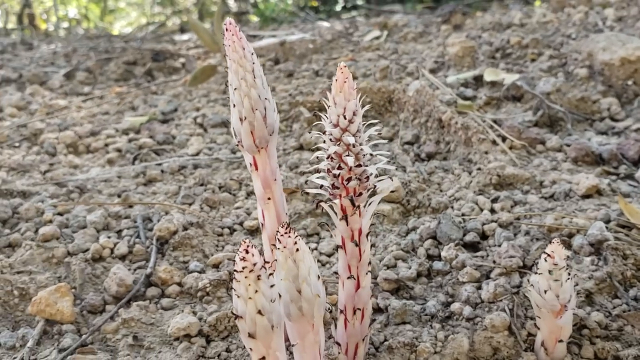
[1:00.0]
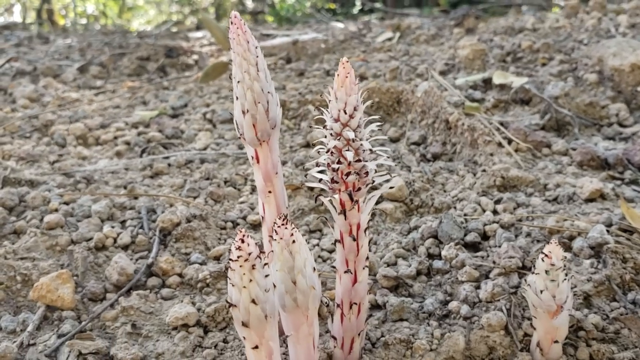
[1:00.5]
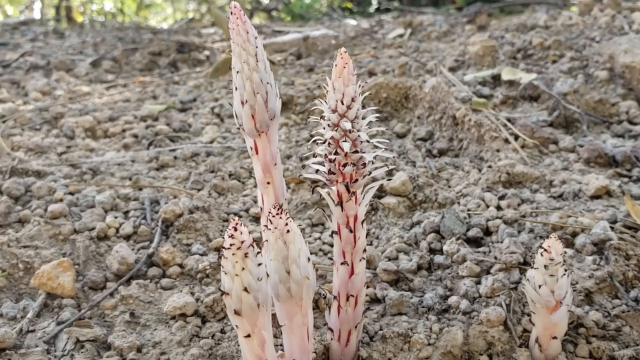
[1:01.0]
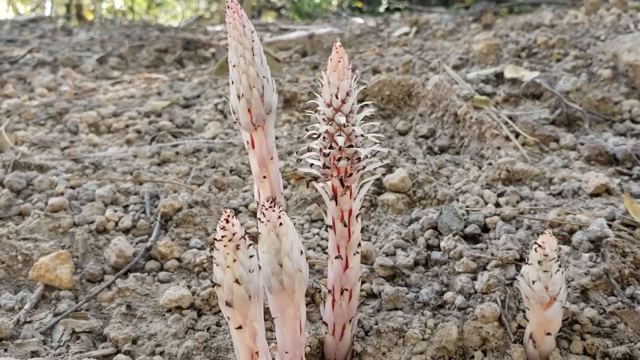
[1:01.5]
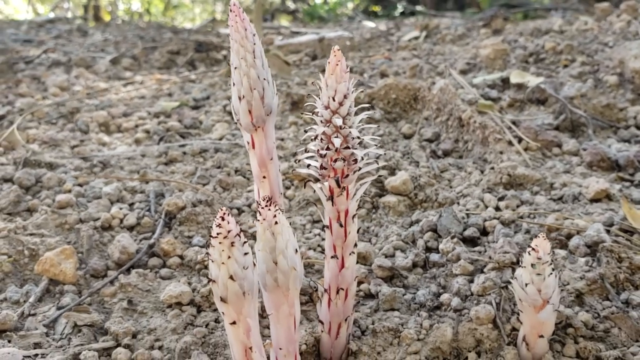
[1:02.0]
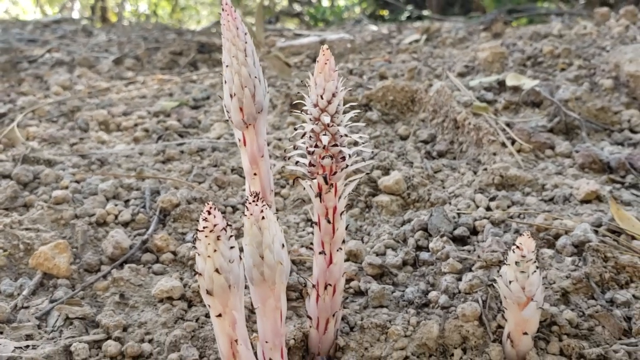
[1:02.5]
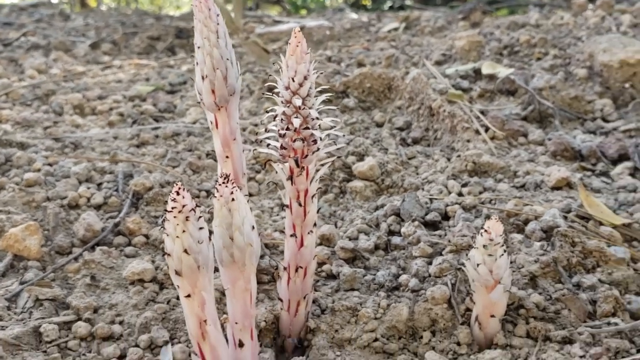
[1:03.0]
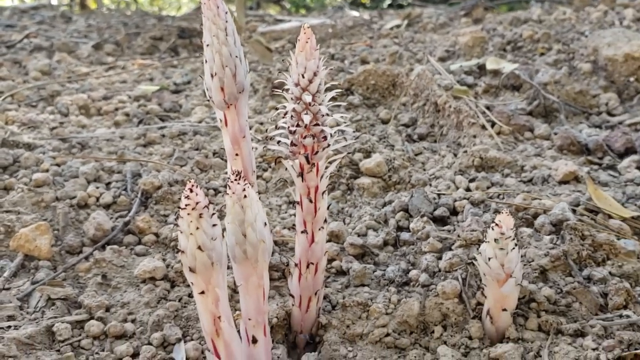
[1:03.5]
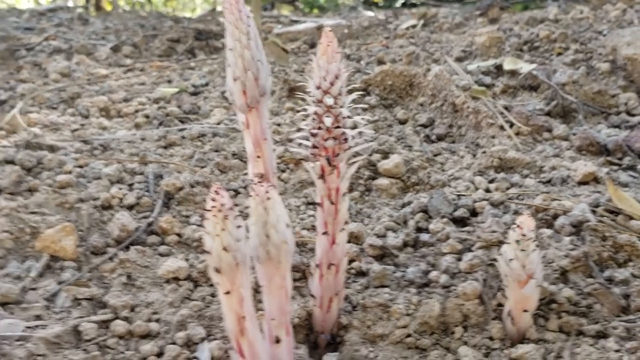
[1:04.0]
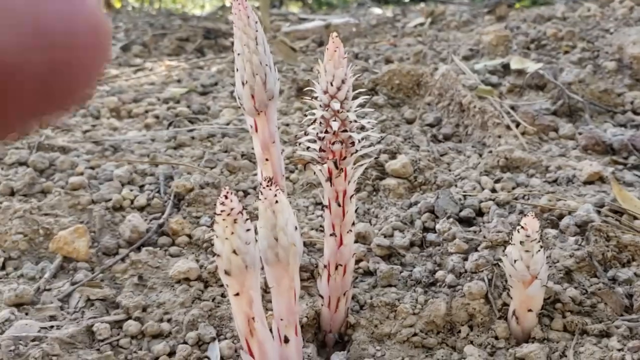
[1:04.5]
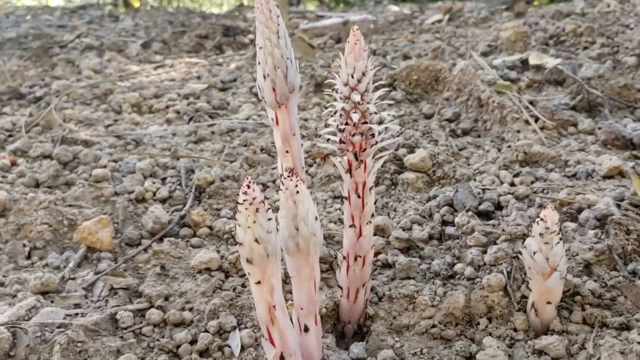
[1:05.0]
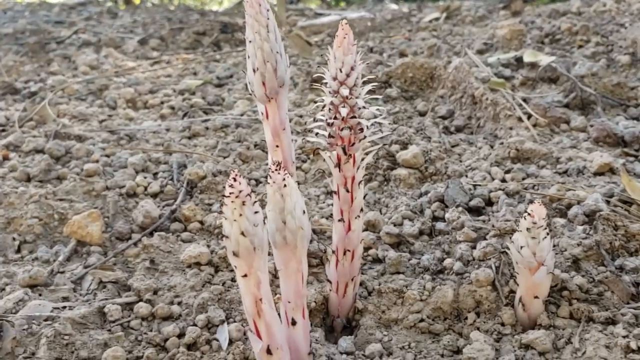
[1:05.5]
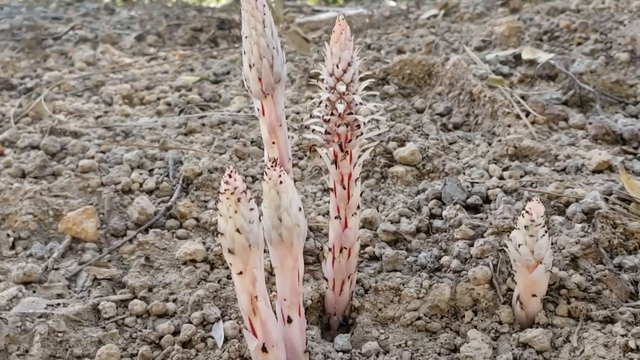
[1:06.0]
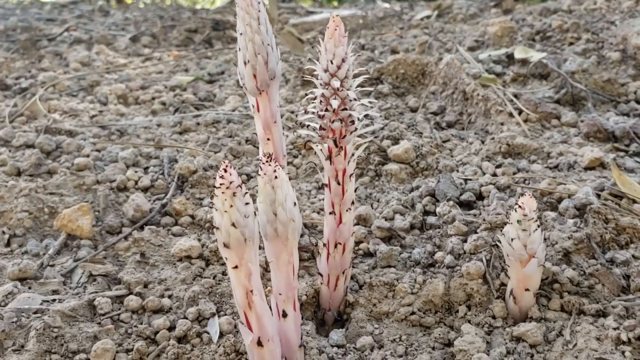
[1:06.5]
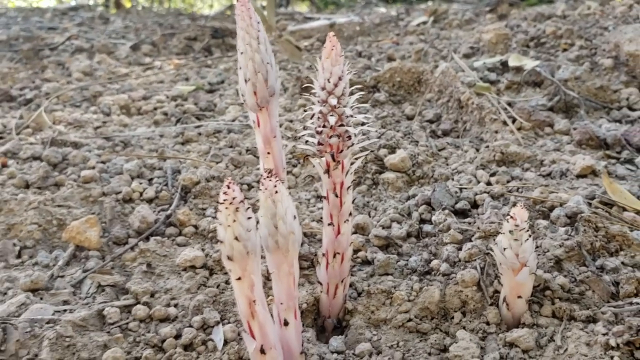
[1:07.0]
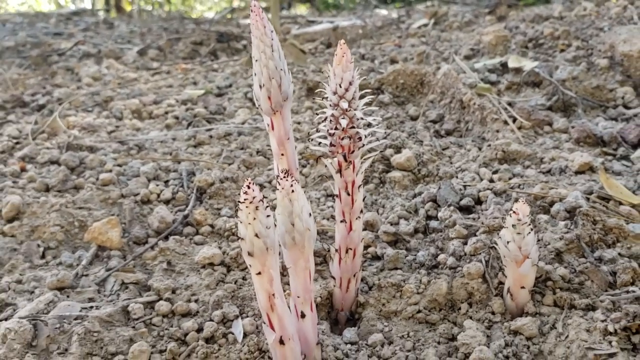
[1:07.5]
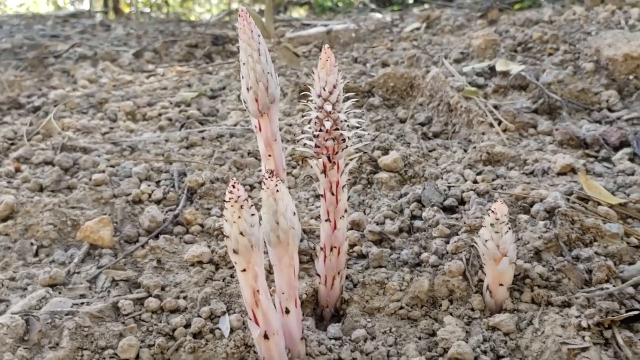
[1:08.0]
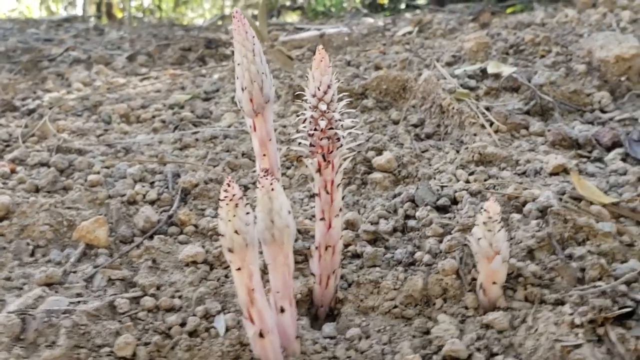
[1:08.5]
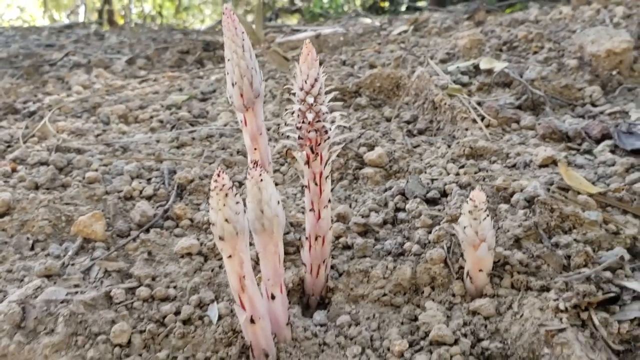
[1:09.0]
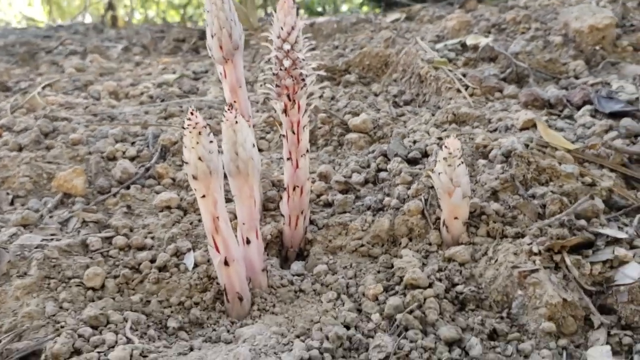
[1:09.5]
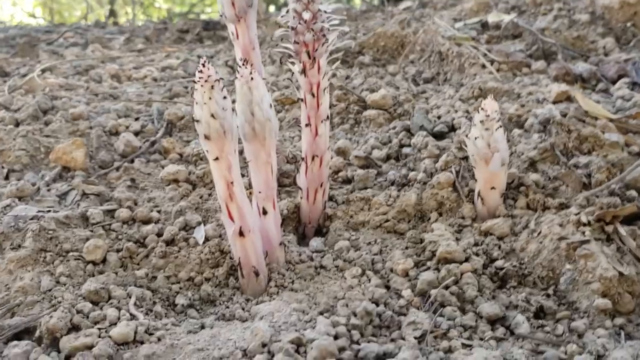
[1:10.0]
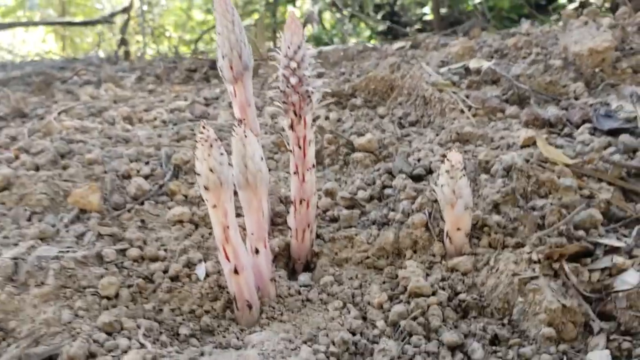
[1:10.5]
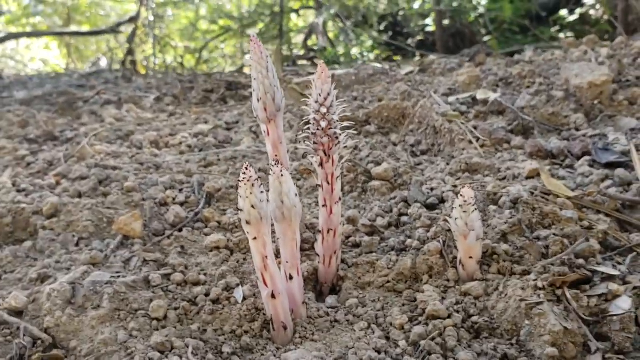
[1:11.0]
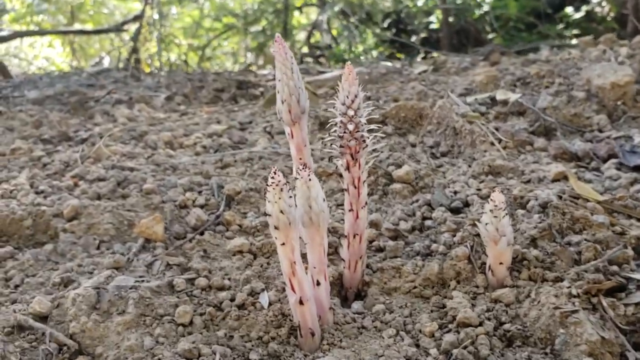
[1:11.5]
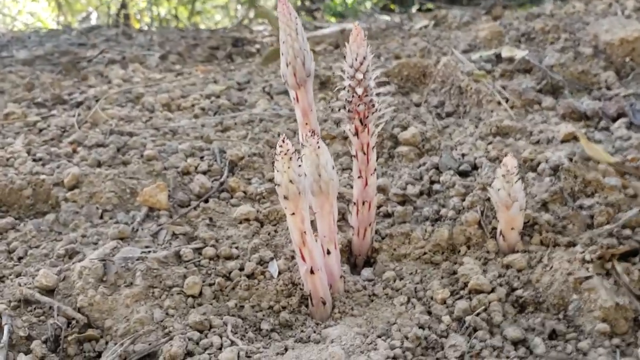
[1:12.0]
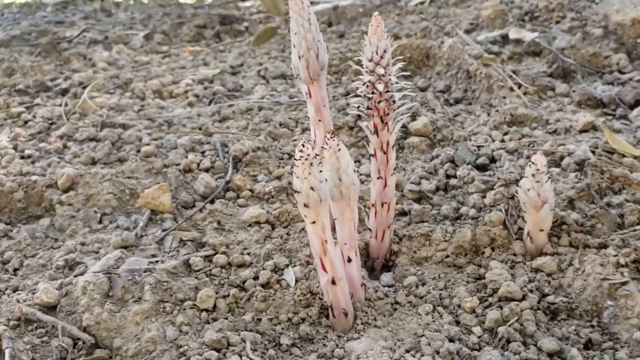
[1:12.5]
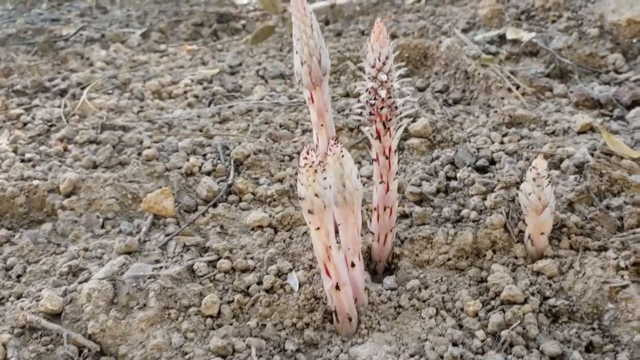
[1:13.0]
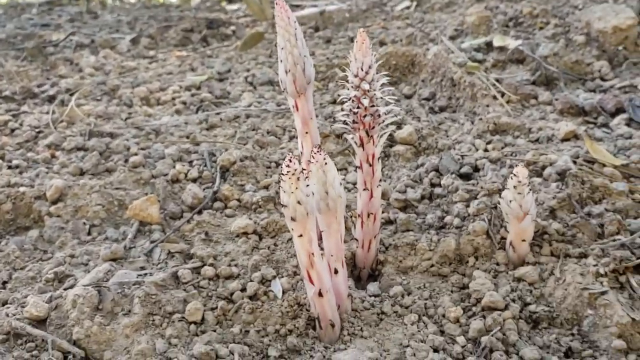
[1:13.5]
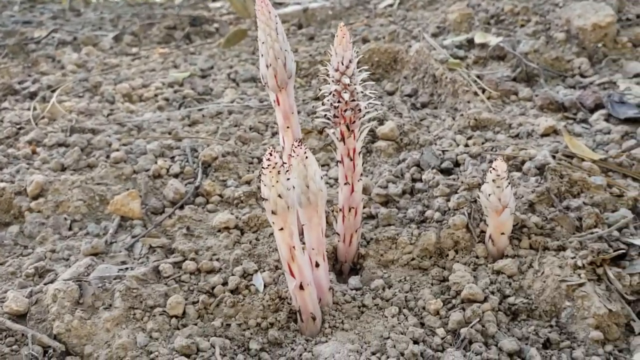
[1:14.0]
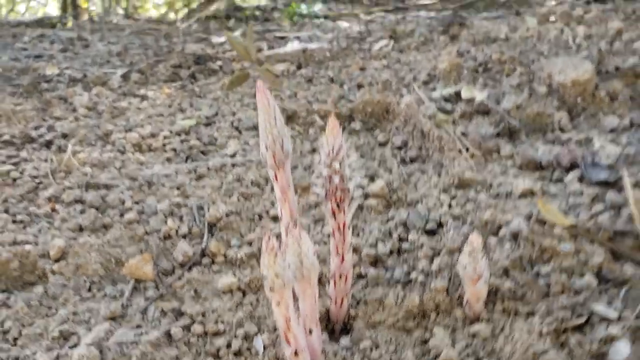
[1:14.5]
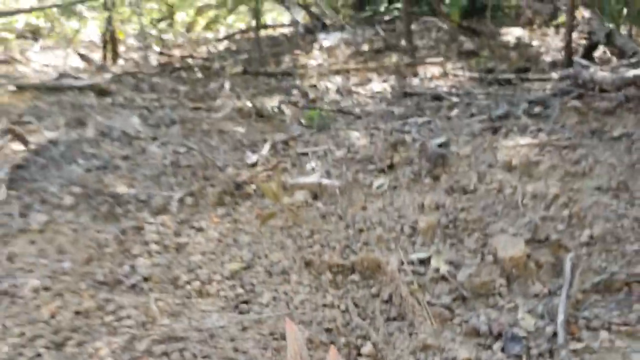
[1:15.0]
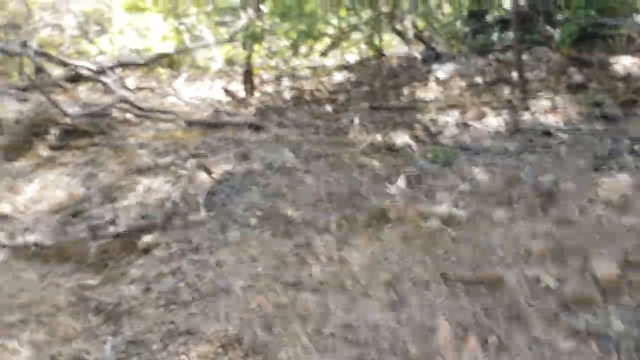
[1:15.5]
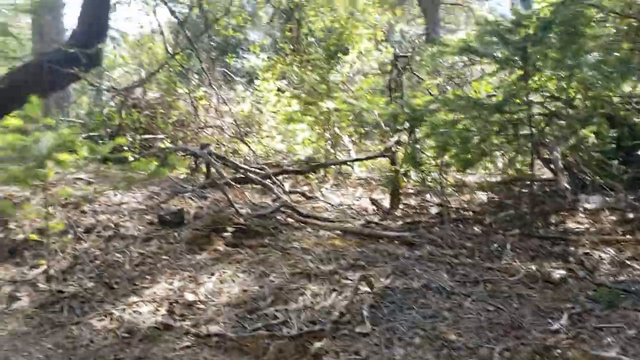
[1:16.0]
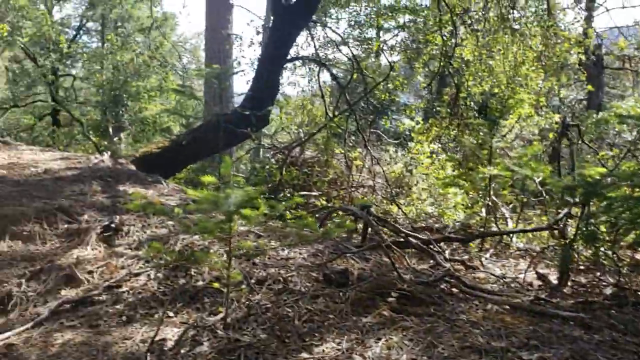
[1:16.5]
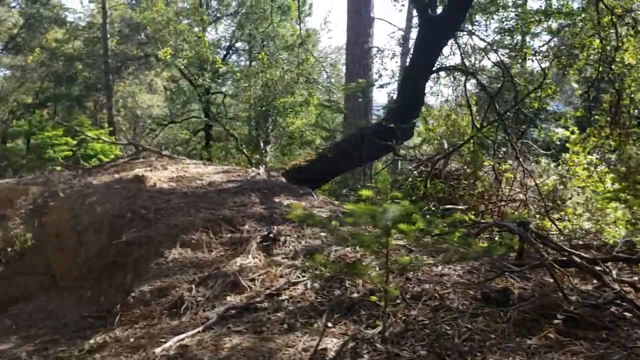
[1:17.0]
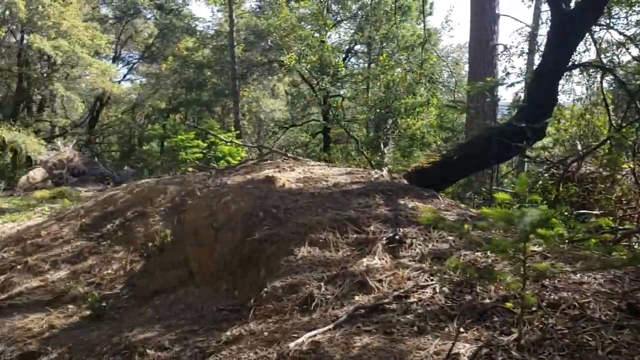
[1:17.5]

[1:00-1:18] The plant is still in view, showing a peach color with some tones around it. The sky is shown, along with the vegetation in the woods.